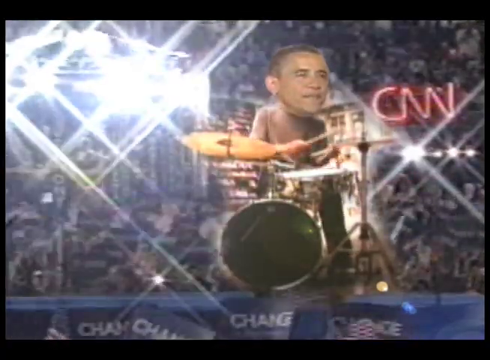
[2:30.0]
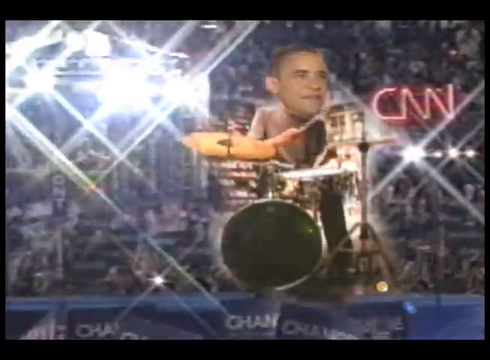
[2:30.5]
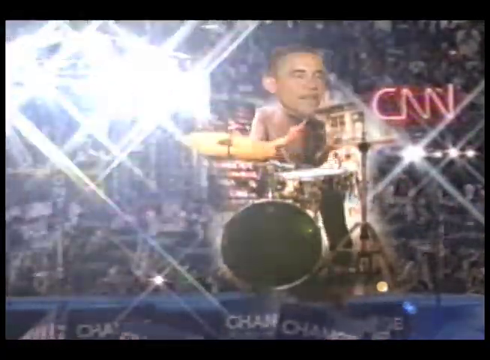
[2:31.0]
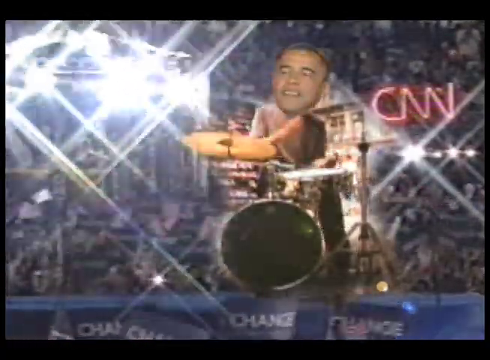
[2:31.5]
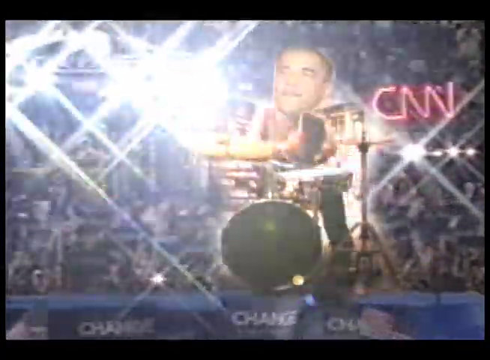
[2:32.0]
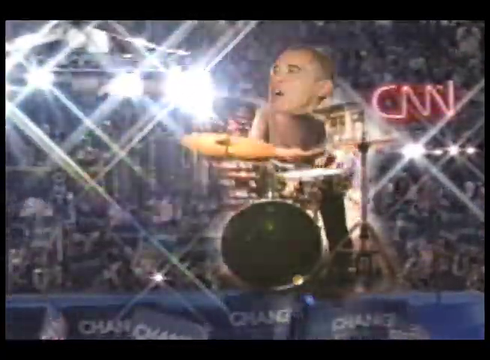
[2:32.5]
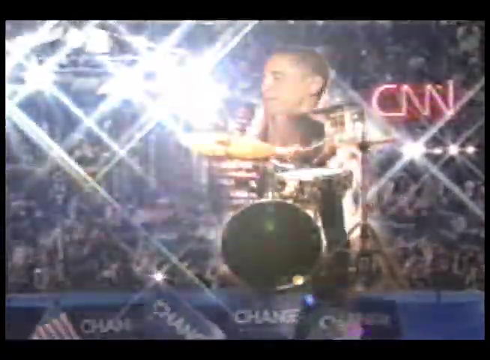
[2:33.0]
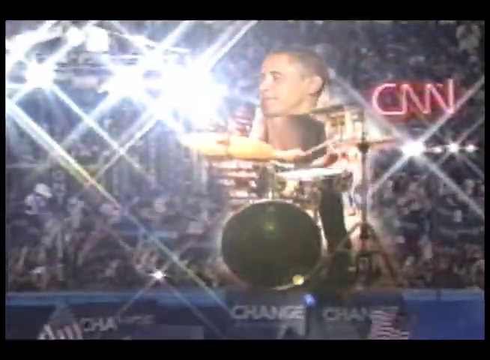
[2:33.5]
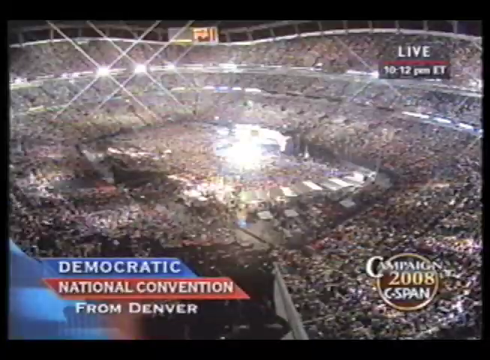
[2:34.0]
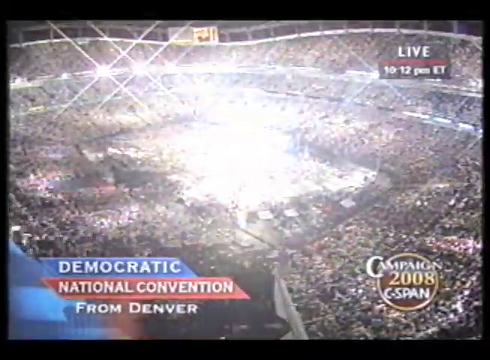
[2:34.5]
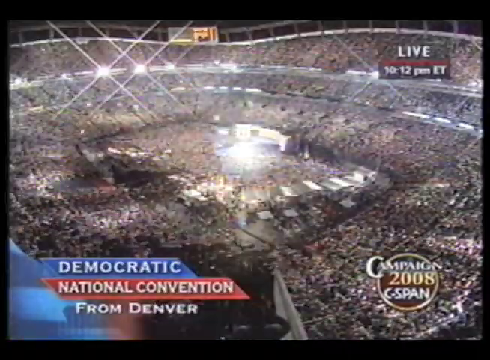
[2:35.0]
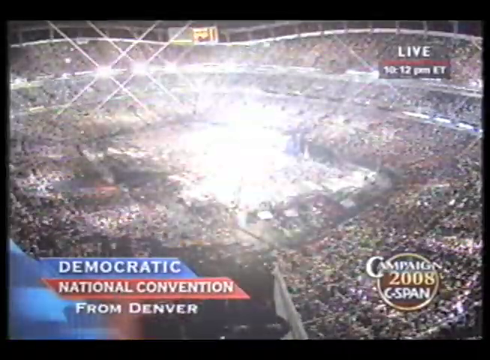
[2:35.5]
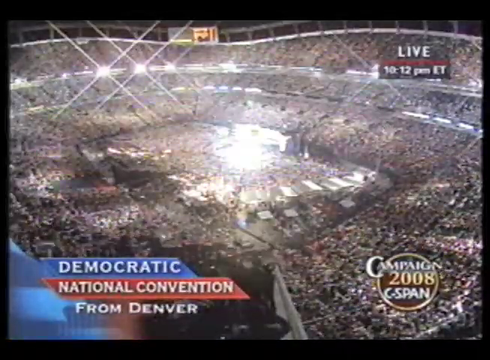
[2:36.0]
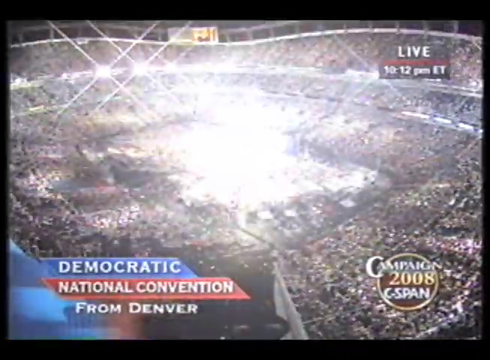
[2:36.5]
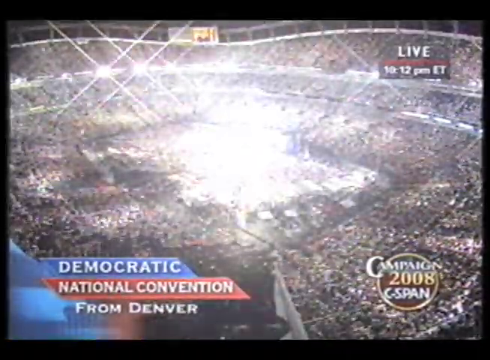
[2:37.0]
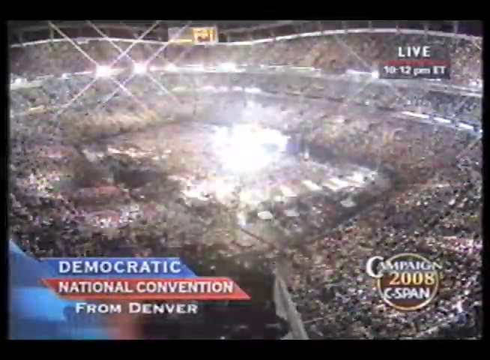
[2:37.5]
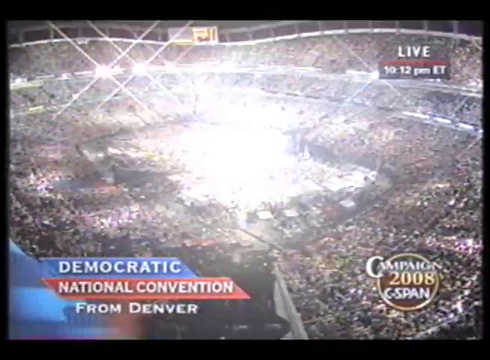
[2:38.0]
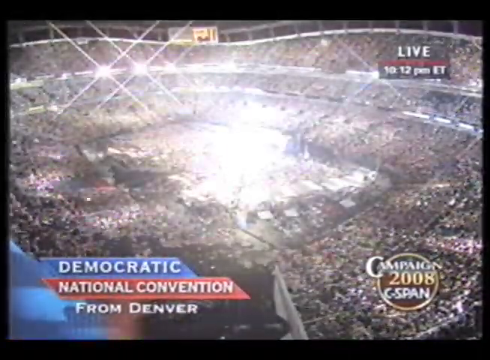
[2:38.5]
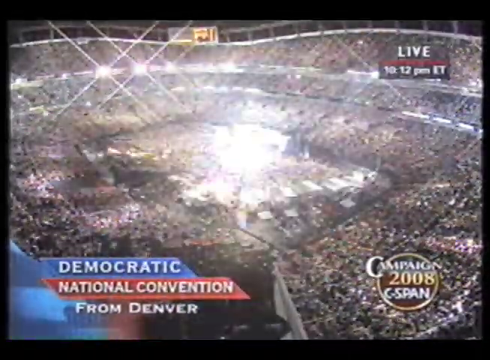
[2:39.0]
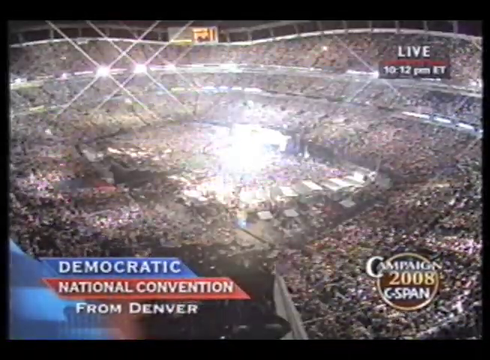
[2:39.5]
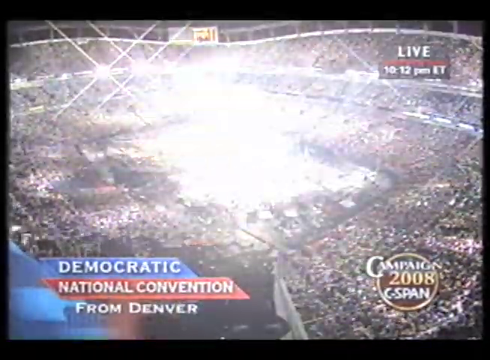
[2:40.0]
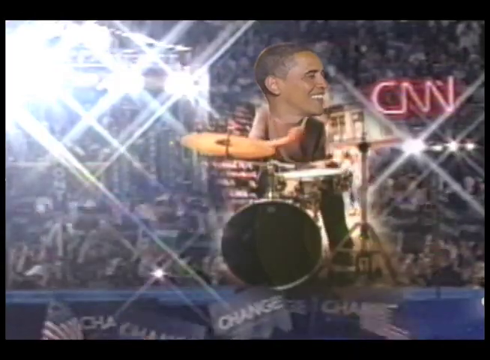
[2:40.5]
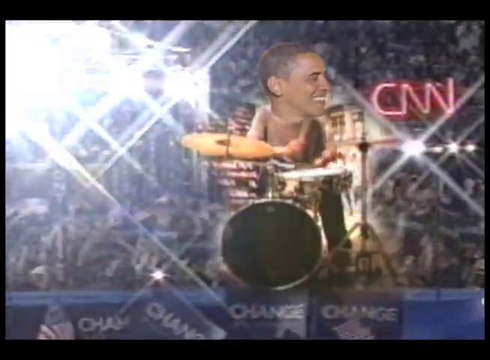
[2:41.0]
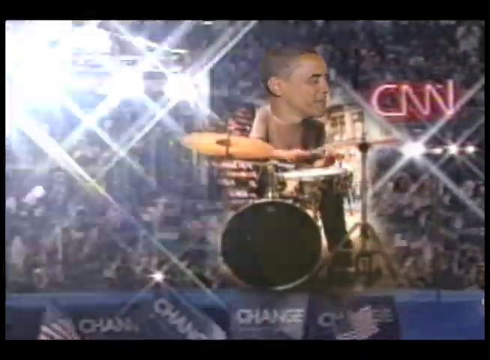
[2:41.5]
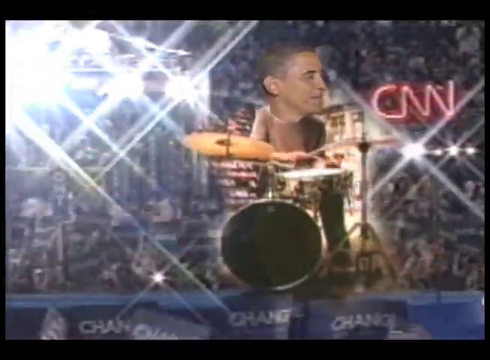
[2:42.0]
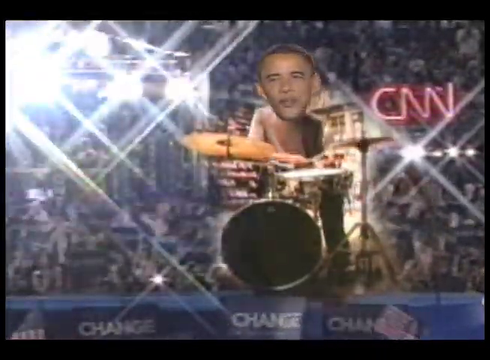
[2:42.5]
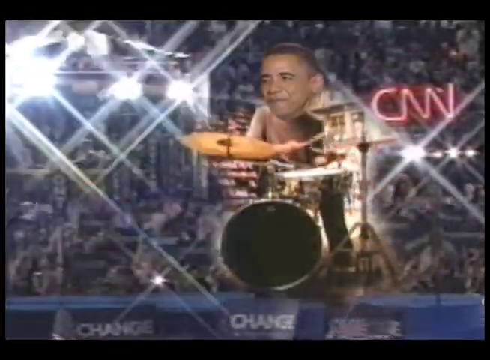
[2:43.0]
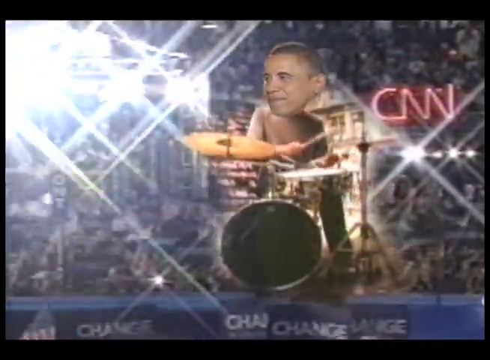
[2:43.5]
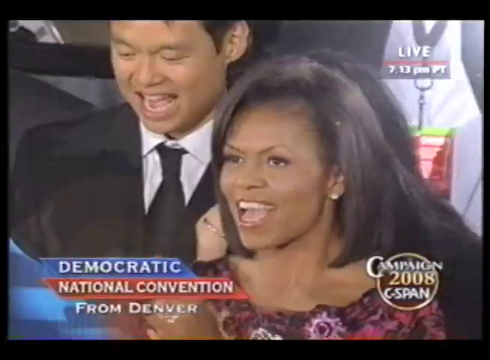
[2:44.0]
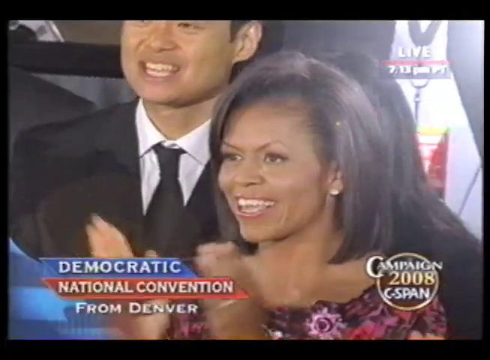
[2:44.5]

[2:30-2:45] The footage mostly focuses on the Obama drummer, a superimposed head of Obama over a drummer playing the drums, as if on the stage of the Democratic National Convention. A neon CNN sign is in the background of a concert-like venue with lots of lights and a crowd waving flags. In front of the stage, people hold up signs that say "change." The view pans out to a large stadium scene with flashing lights; text at the bottom says "Democratic National Convention" from Denver, "live" appears at the upper right, and "campaign 2008" is at the lower left. The video cuts to Michelle Obama clapping along and saying "yes, we can, yes, we can," then back to Obama, then back to Michelle again, rotating between the drummer, the arena and Michelle Obama. The crowd in the background appears to cheer for the drumming Obama.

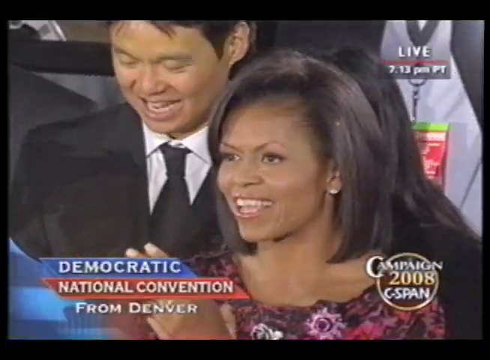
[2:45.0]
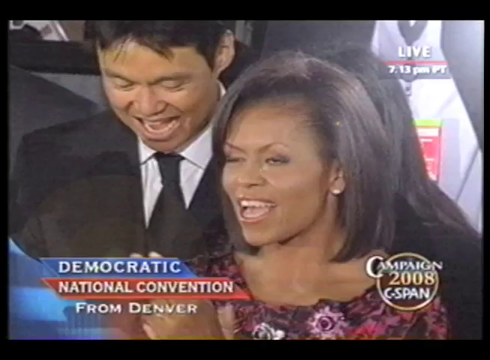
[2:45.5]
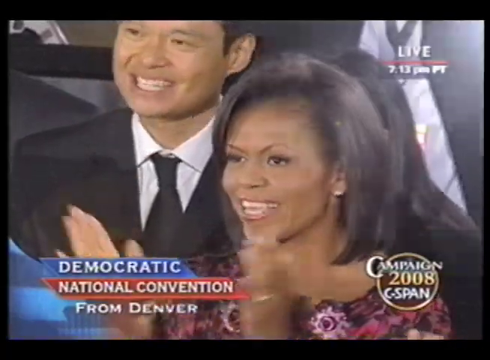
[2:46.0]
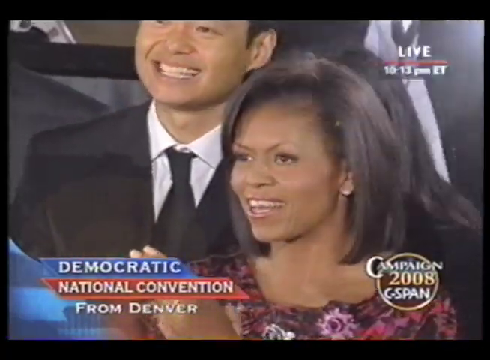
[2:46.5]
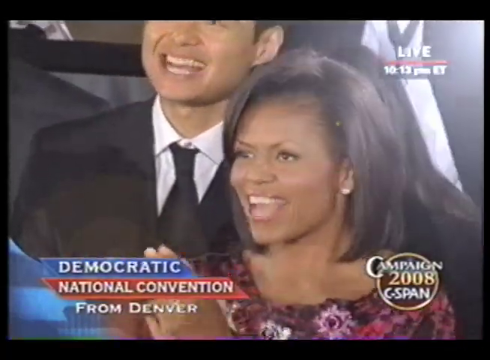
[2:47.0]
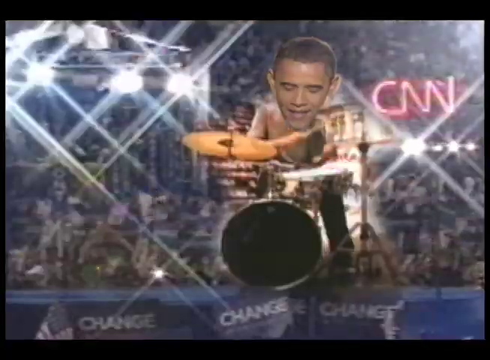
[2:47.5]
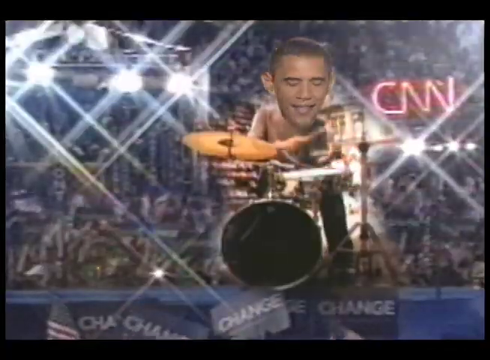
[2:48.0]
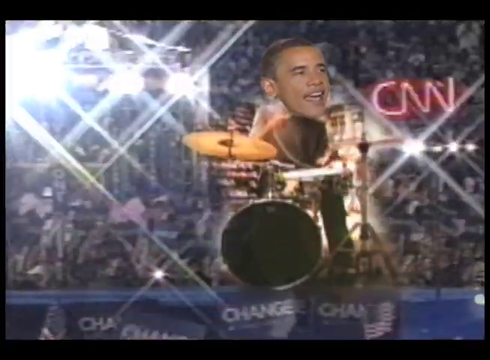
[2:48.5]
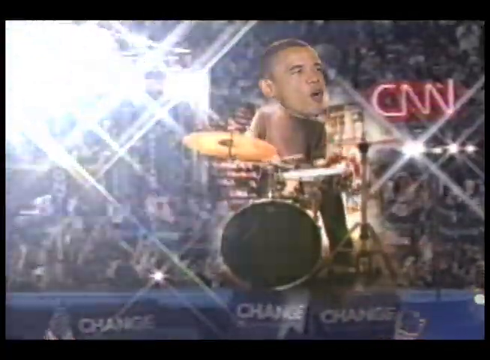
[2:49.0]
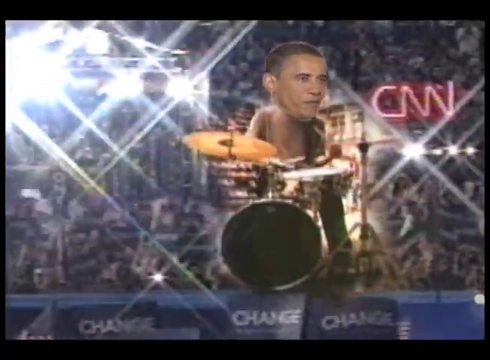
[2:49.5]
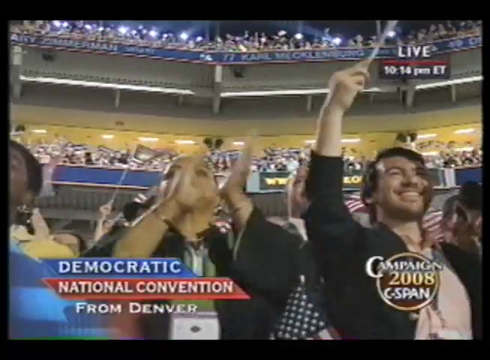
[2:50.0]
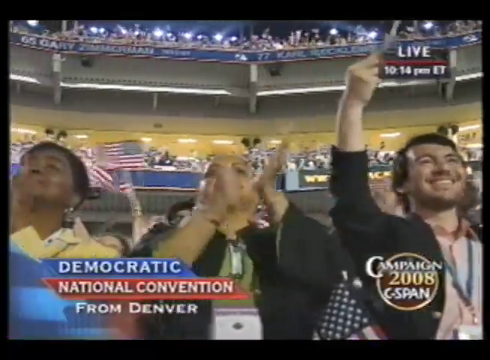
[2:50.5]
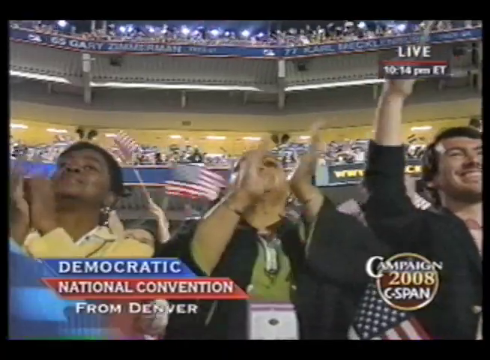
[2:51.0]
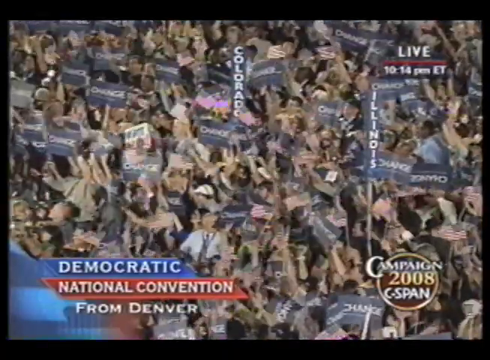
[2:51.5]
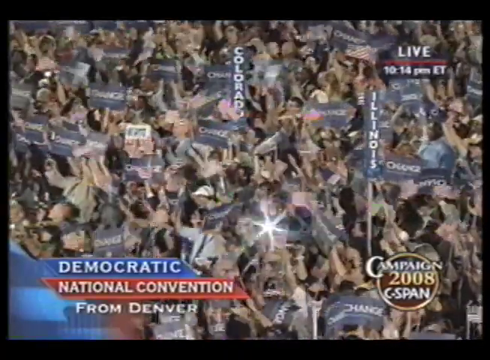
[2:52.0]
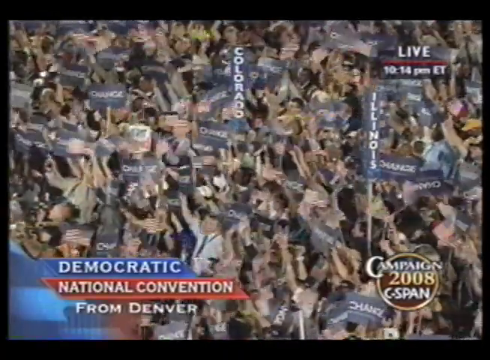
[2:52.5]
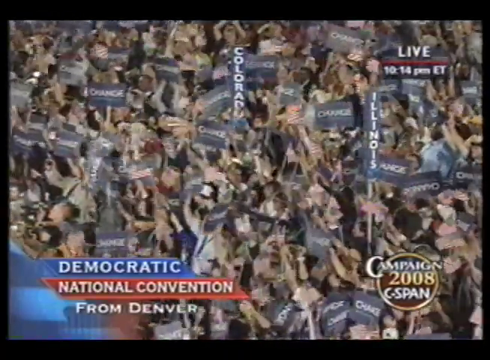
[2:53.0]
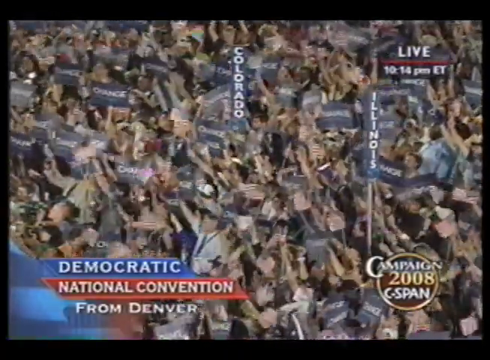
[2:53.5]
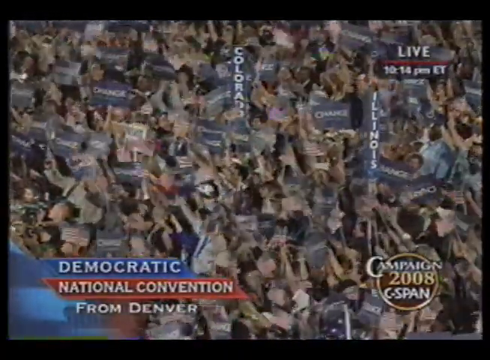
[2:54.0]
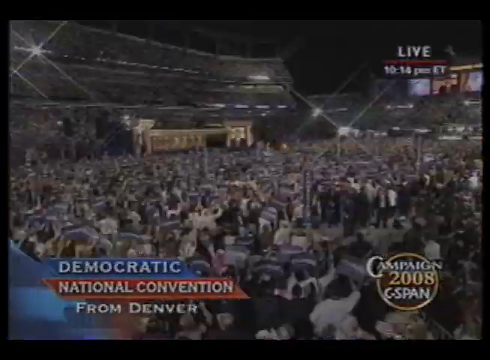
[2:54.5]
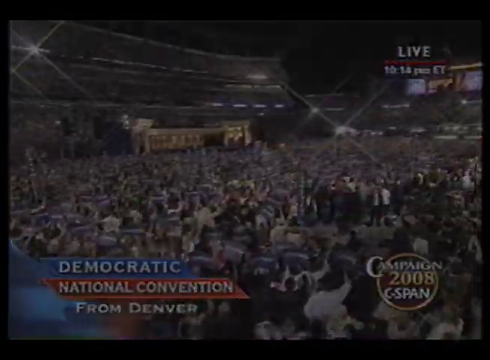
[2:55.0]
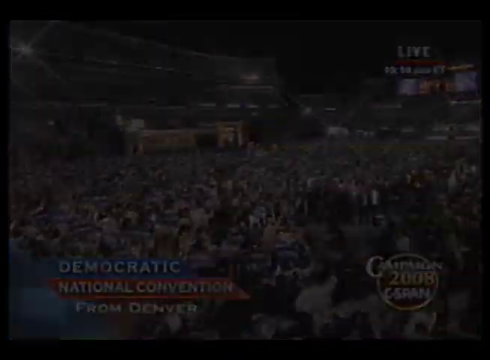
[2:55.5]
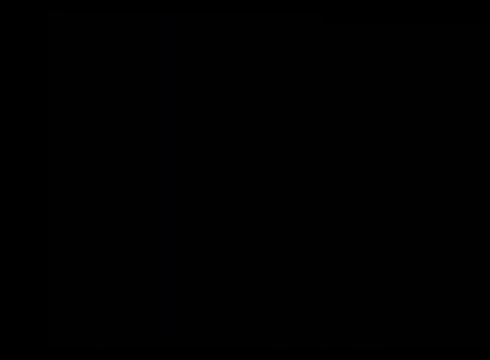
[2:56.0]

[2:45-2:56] Michelle Obama, in a floral dress, claps in the crowd of the Democratic National Convention, chanting "yes we can," with some men in suits in the background behind her. The view pans to Obama playing the drums, his face superimposed and kind of oversized, with the Democratic National Convention behind him: people waving flags, a neon CNN sign in the back, and people at the front holding up signs that say "change." The video cuts to a closeup of people waving flags, then pans out to a larger scene showing most of the people holding up signs from different states and "change" signs while waving flags. It then pans out and fades to black.